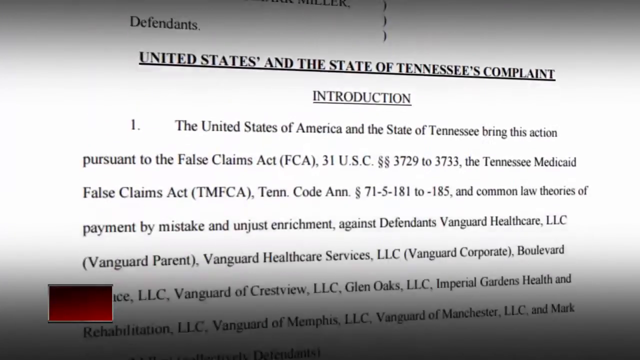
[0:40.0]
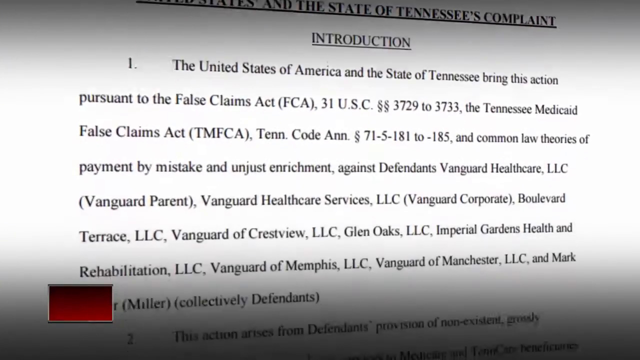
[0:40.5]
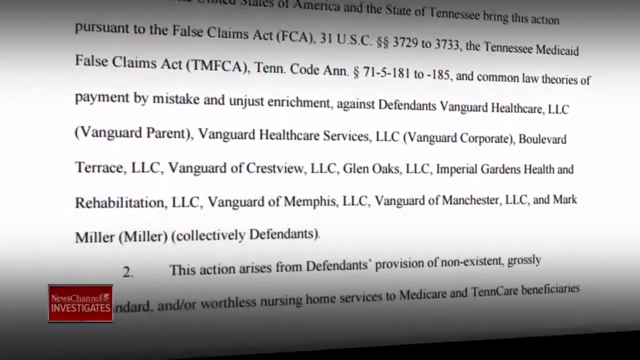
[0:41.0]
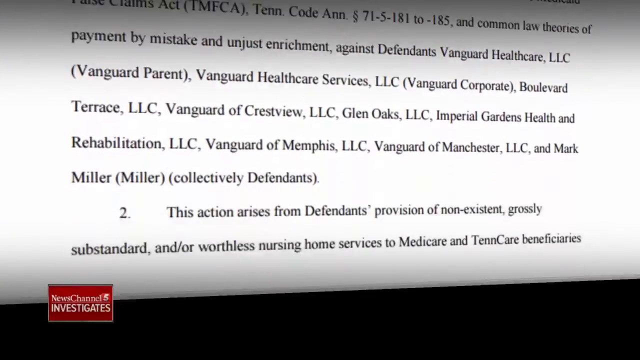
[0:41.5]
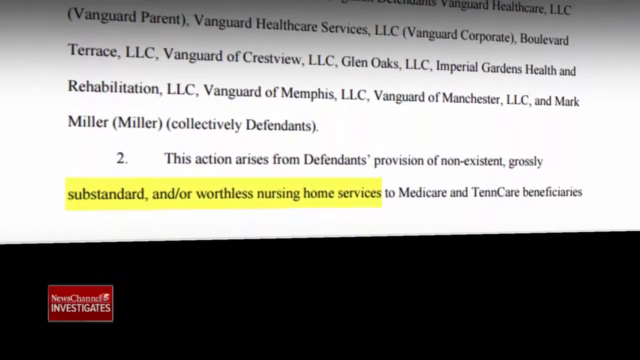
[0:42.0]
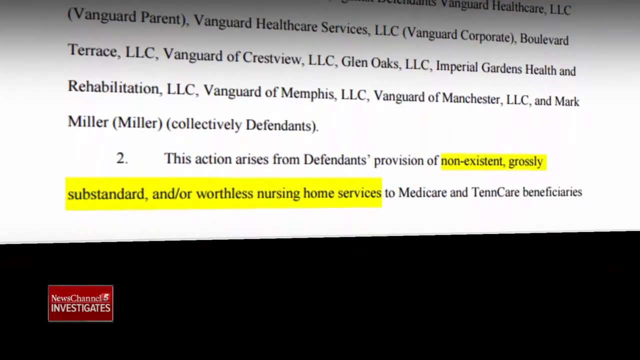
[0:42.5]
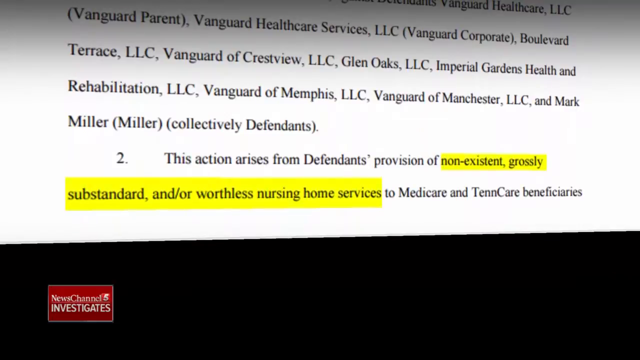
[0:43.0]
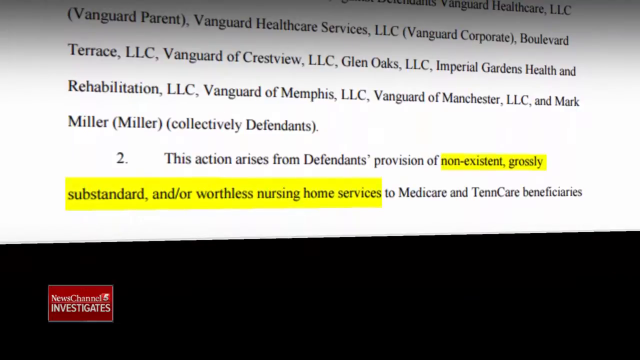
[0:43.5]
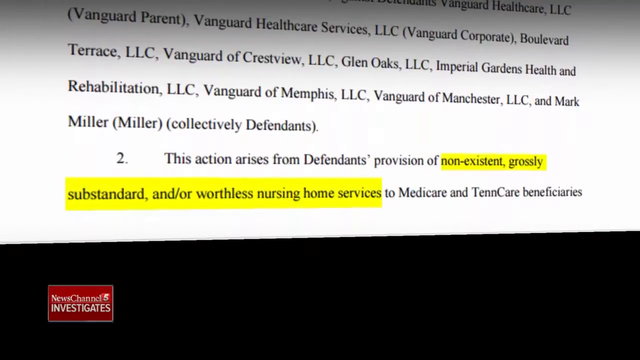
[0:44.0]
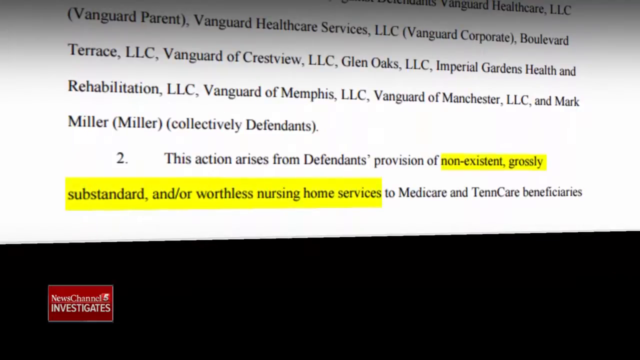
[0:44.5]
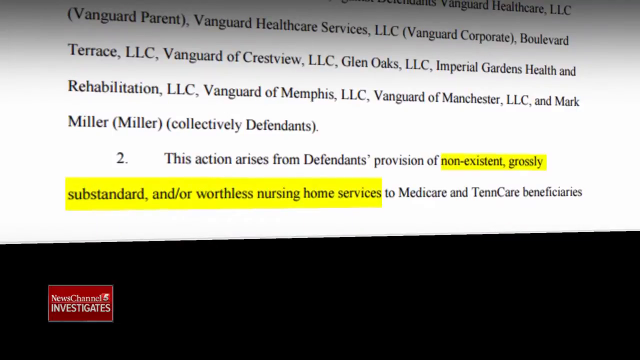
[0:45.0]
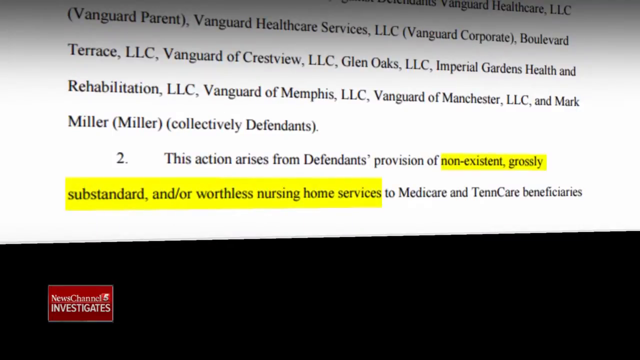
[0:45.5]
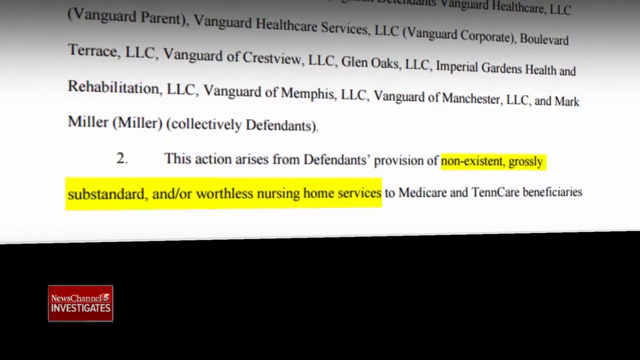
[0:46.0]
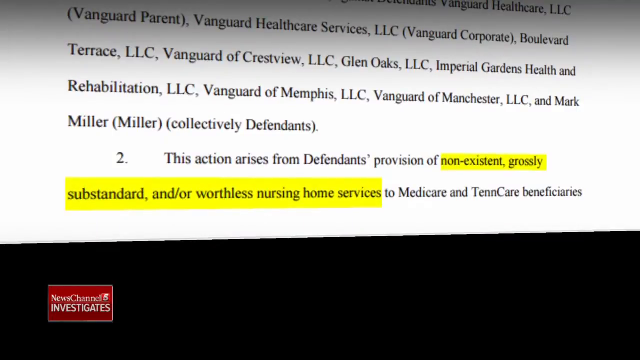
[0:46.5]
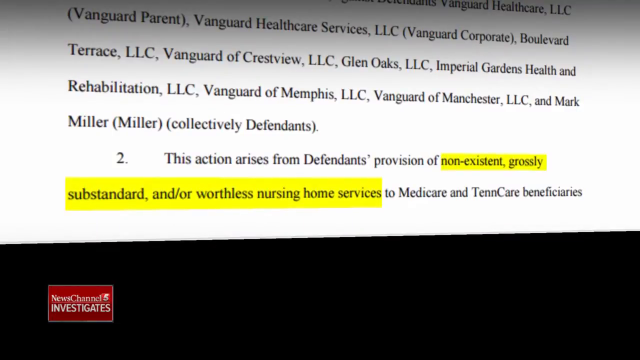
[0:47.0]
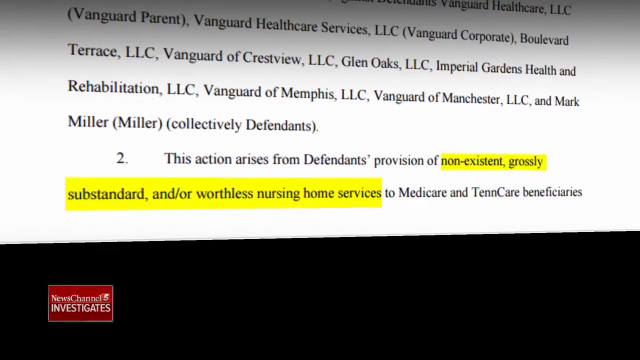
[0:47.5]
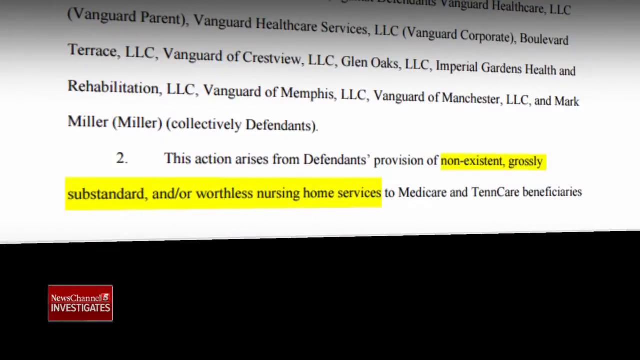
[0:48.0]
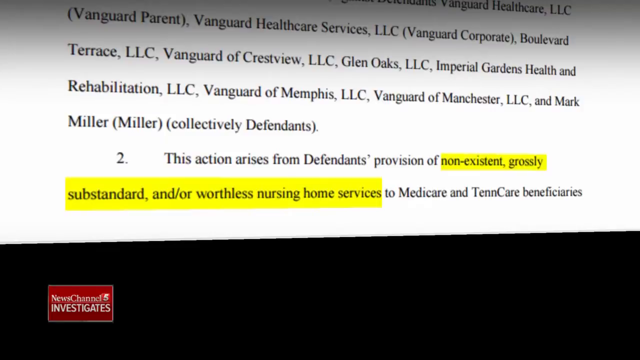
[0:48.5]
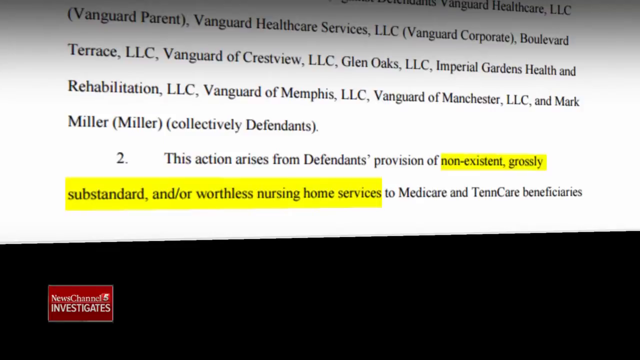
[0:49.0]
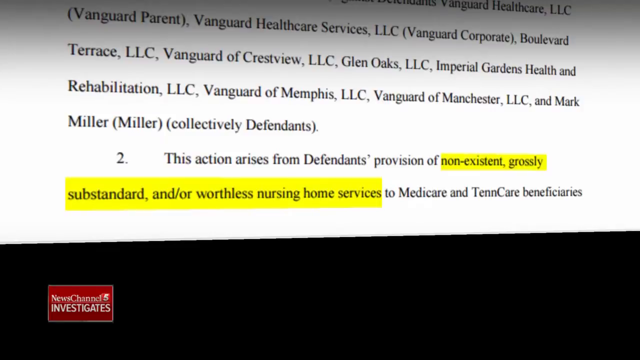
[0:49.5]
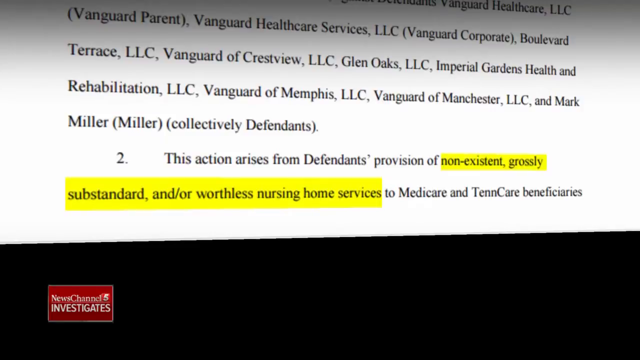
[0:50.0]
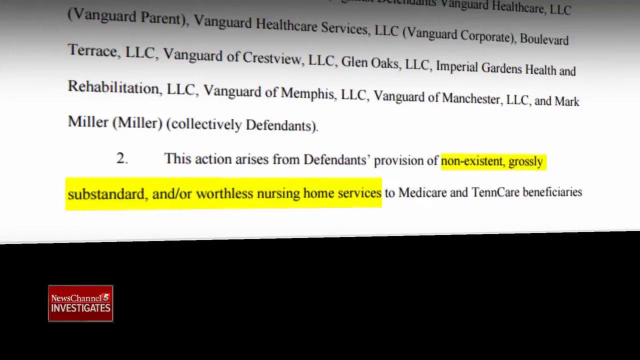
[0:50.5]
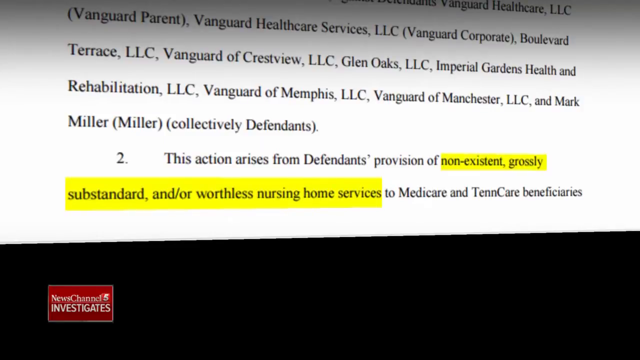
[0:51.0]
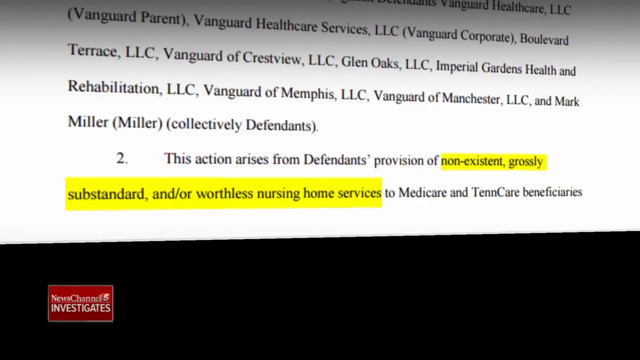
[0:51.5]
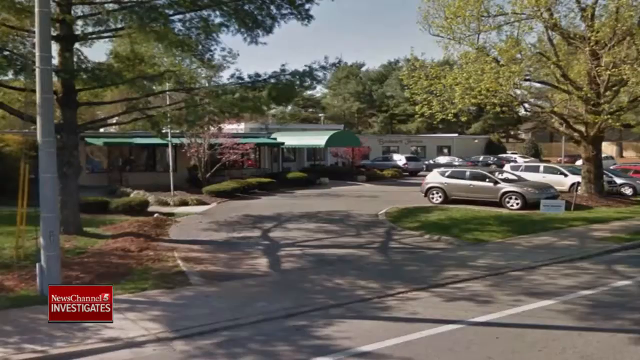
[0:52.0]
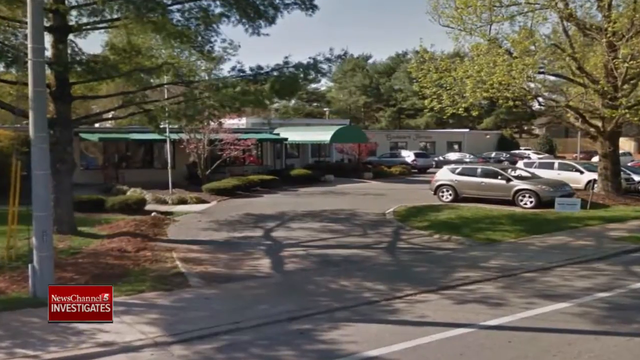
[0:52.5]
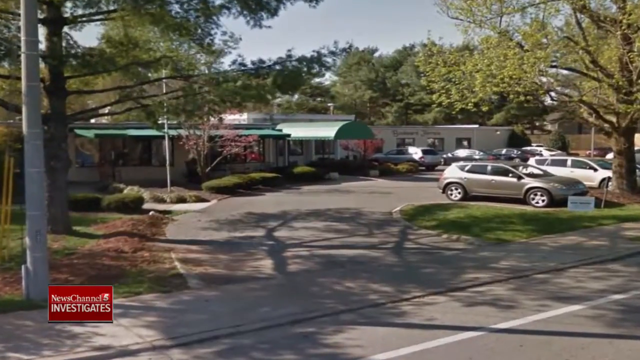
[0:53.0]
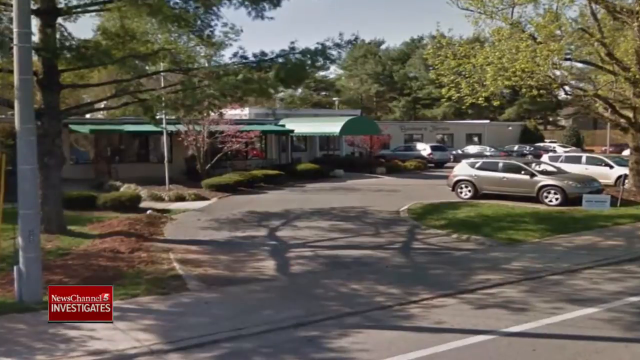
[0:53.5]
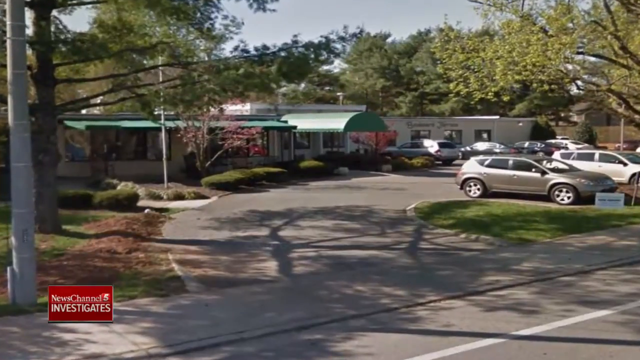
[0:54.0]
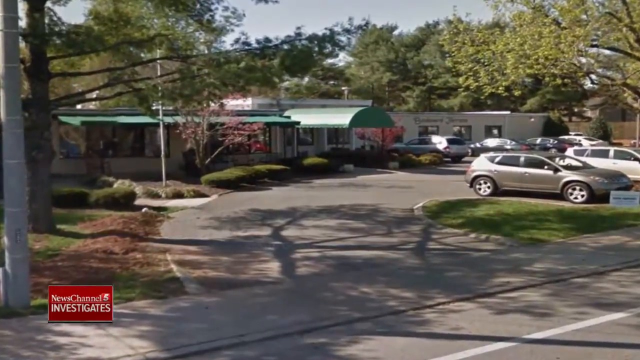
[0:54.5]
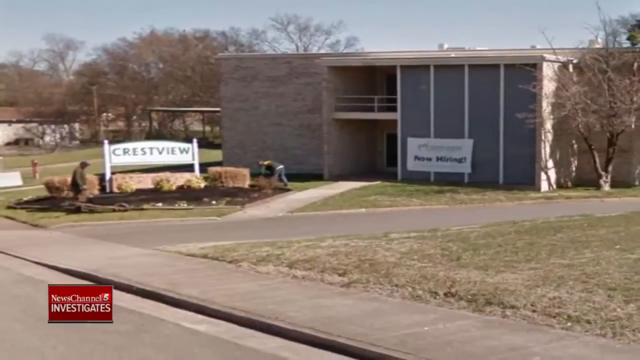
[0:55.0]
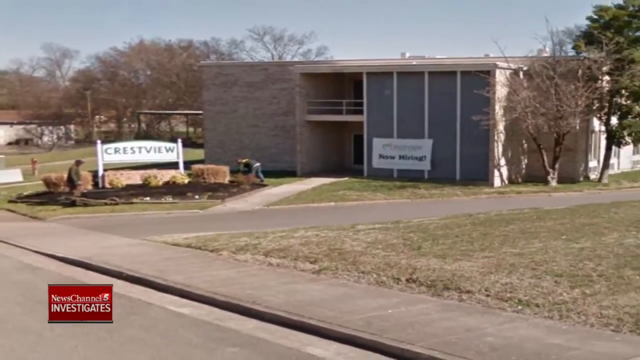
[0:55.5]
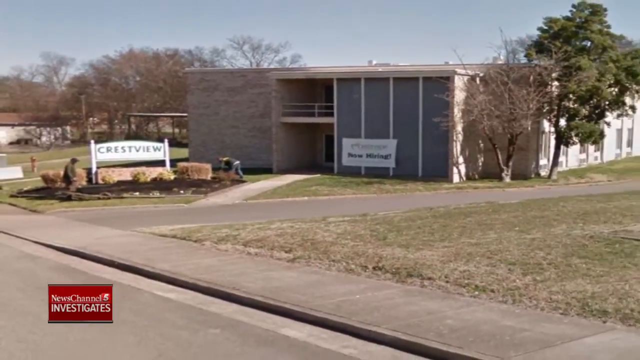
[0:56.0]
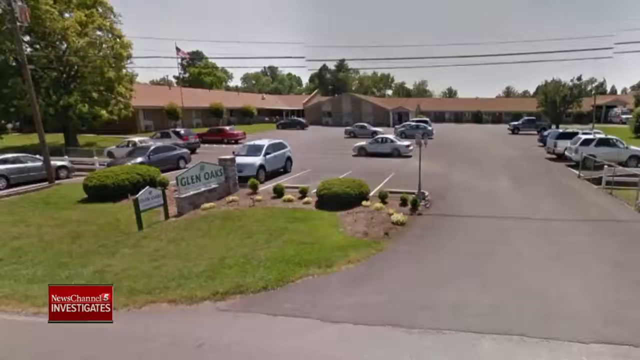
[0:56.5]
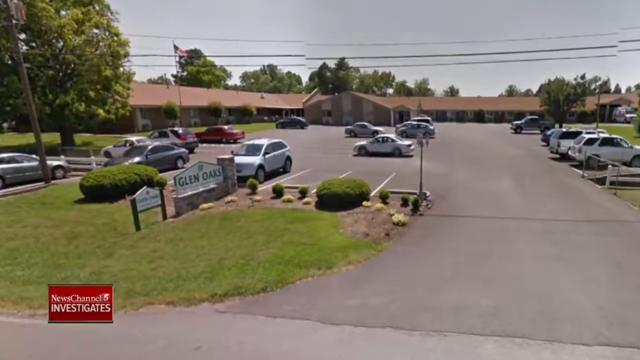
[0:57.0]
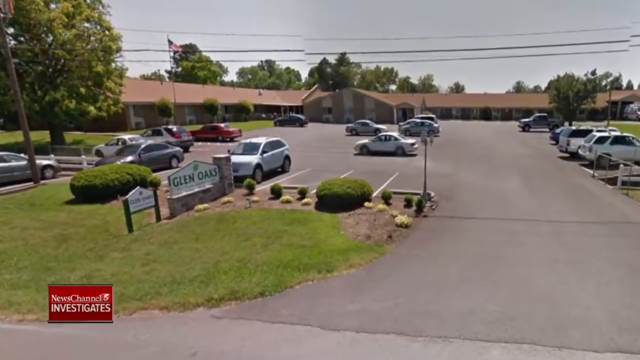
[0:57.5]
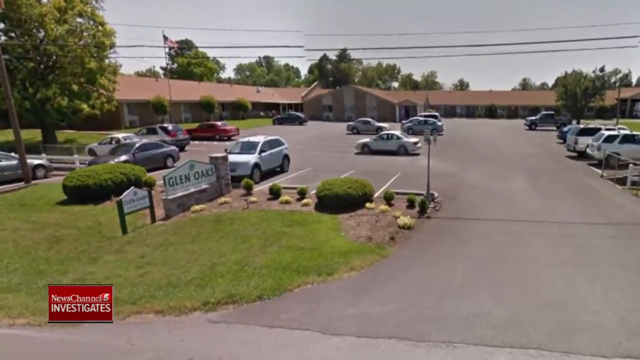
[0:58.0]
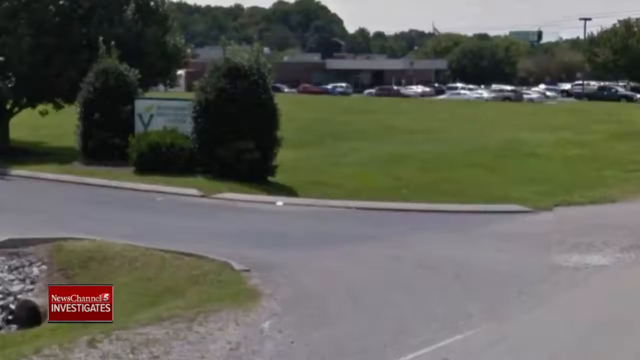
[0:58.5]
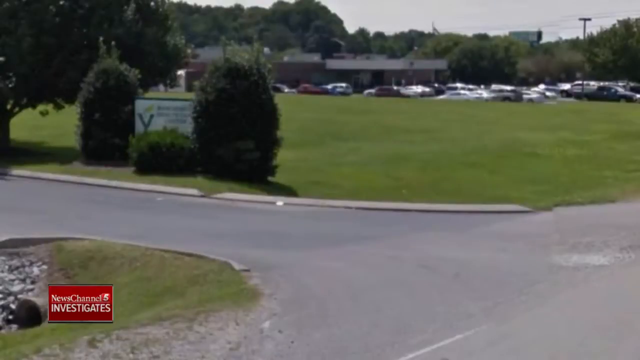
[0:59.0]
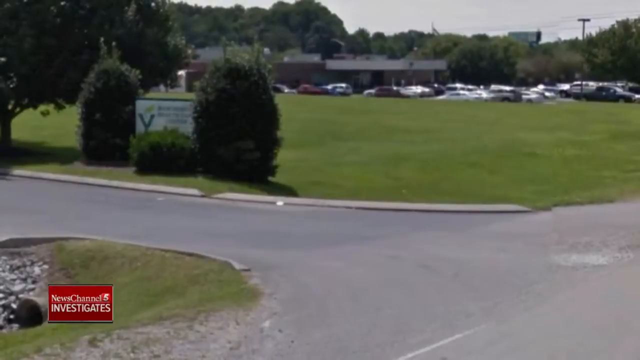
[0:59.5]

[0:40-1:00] Court documents show a long list of lawsuits against various companies, most of them owned by a company known as Vanguard Limited Licensing. The document states that the action arises from the defendants' provision of nonexistent, grossly substandard and/or worthless nursing home services to Medicare and TennCare beneficiaries. It then shows the facilities being sued, of which there are quite a few: most are located in Nashville, some in Memphis, and almost all are in Middle Tennessee. The document shows at least 30 Vanguard holdings or limited licensings involved in the lawsuit, including the name Mark Miller, the defendant in the case.